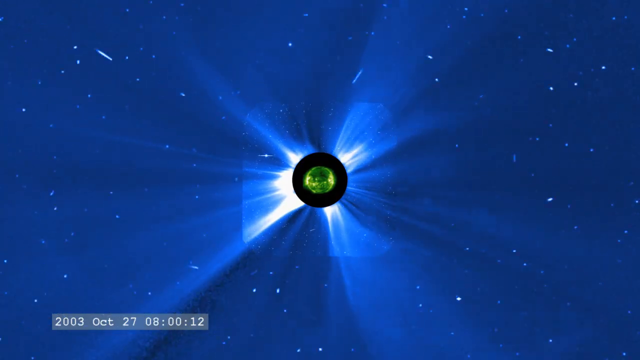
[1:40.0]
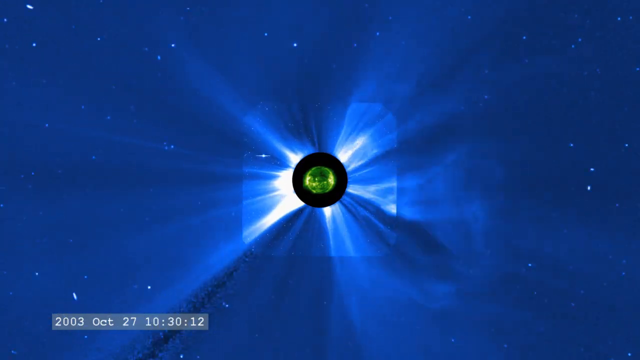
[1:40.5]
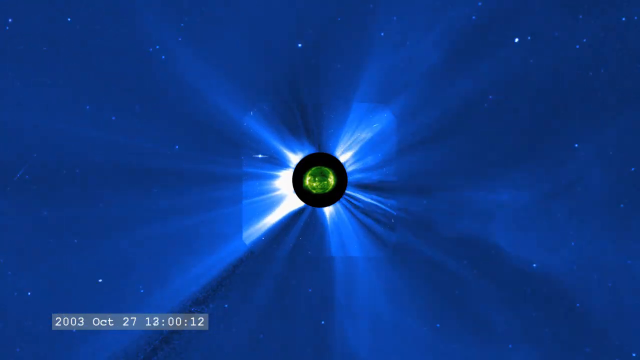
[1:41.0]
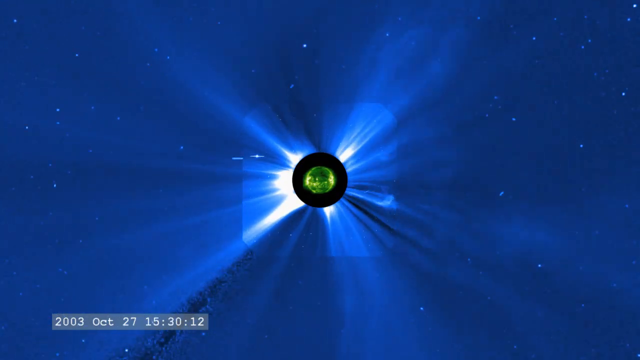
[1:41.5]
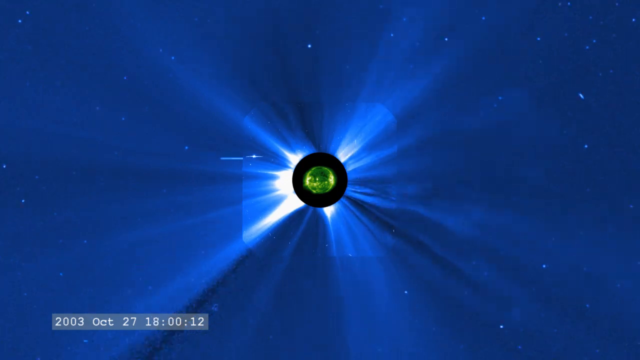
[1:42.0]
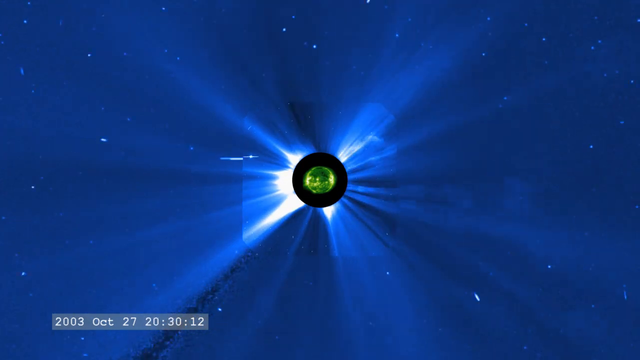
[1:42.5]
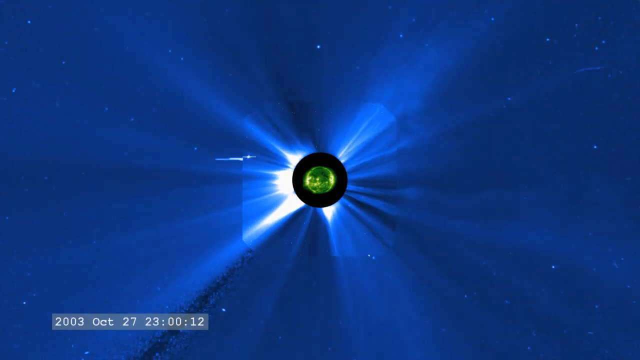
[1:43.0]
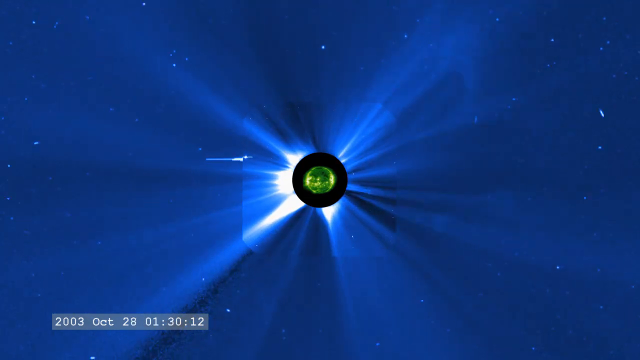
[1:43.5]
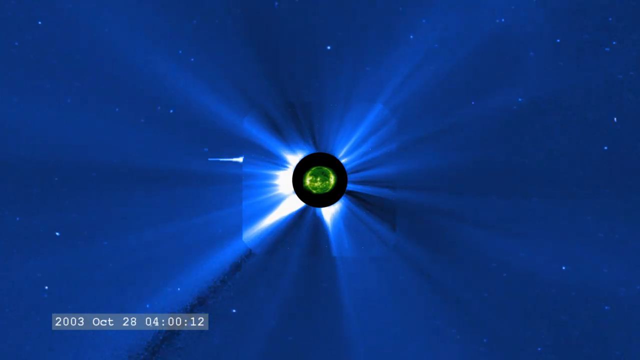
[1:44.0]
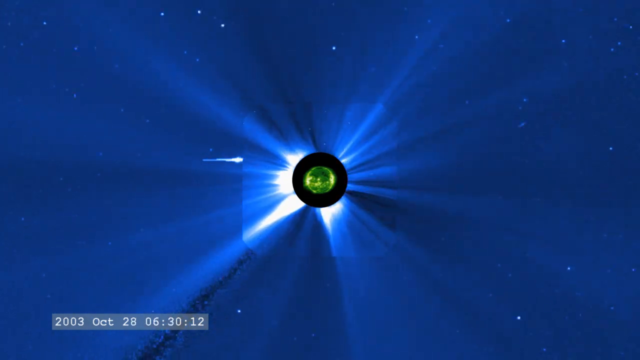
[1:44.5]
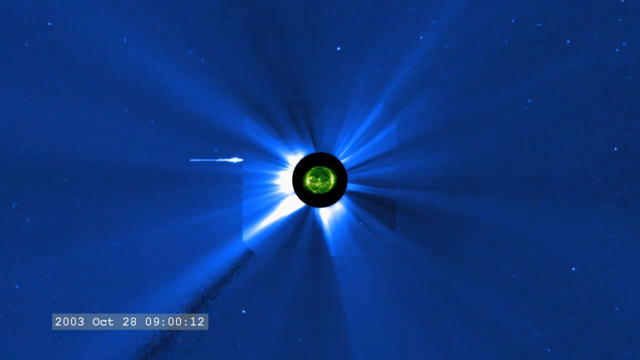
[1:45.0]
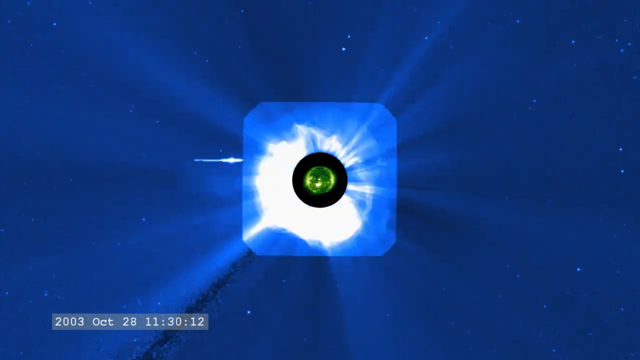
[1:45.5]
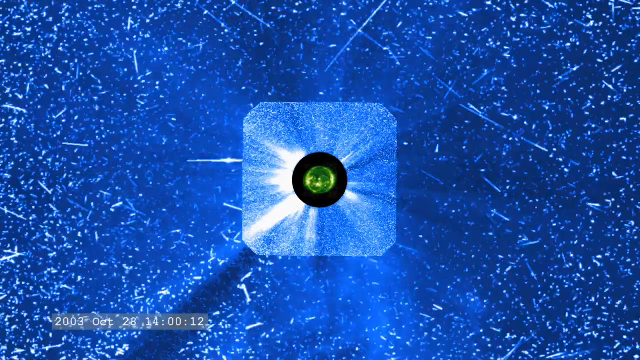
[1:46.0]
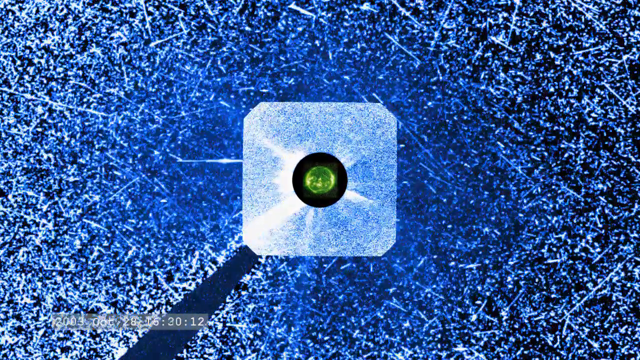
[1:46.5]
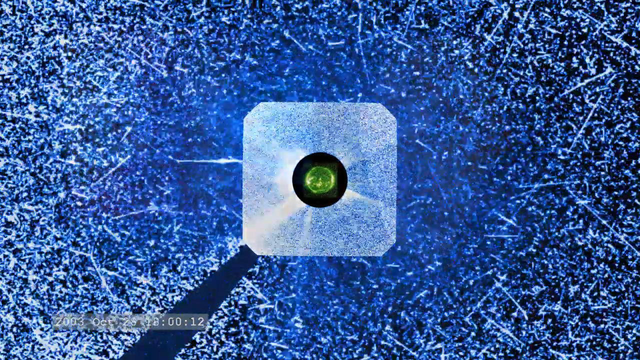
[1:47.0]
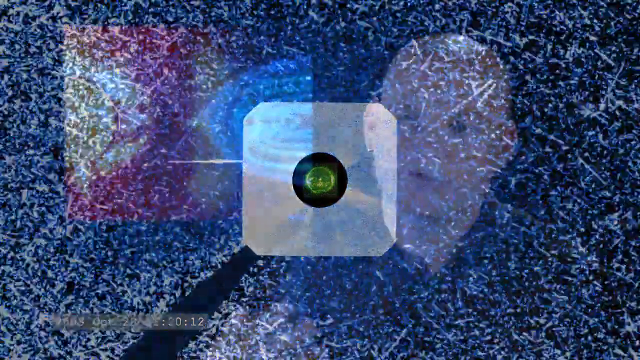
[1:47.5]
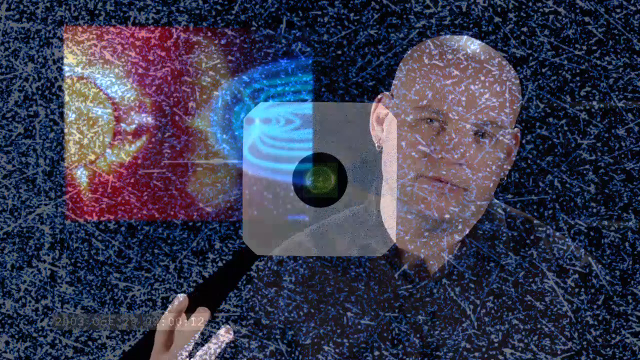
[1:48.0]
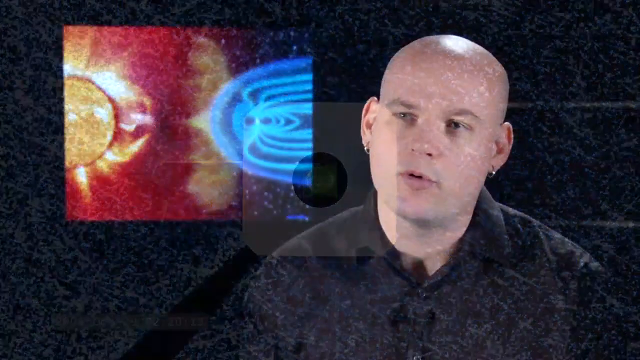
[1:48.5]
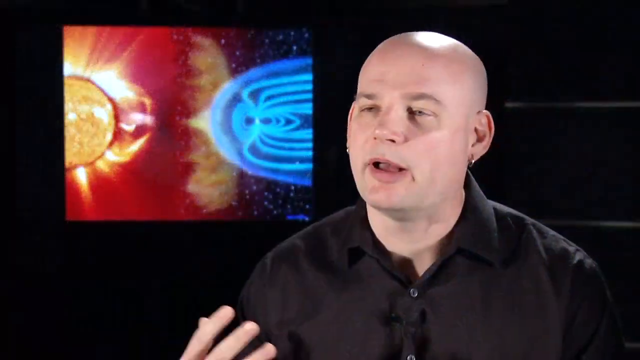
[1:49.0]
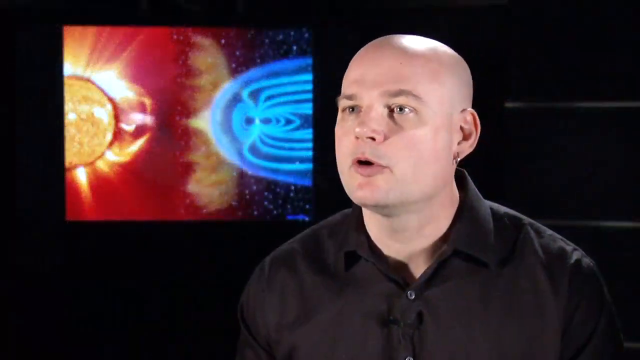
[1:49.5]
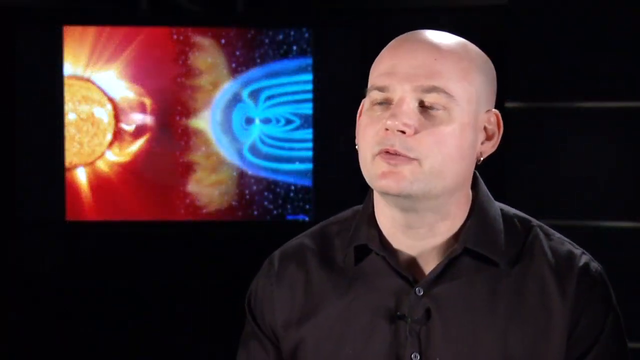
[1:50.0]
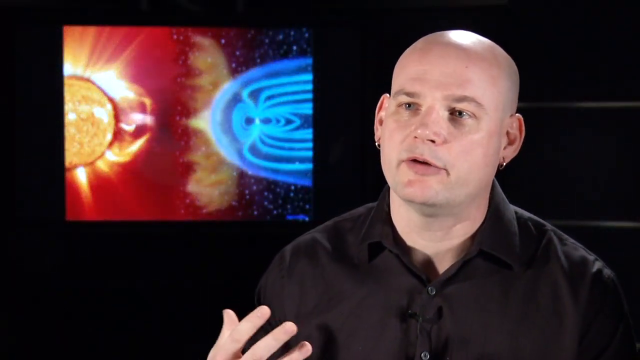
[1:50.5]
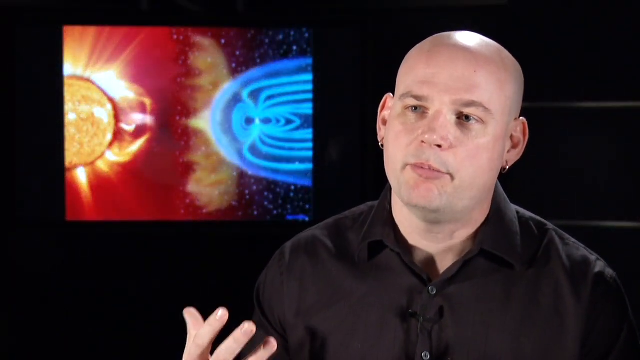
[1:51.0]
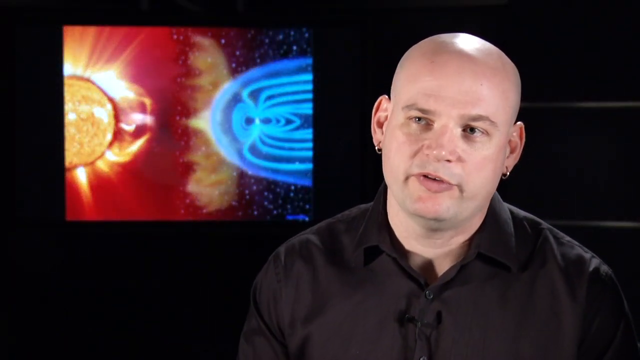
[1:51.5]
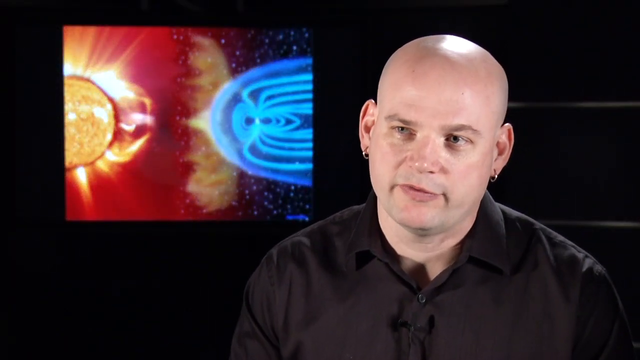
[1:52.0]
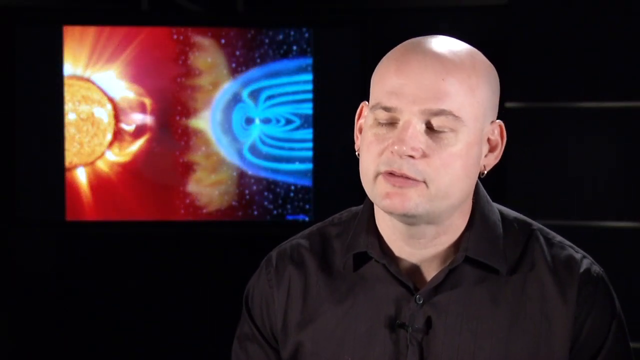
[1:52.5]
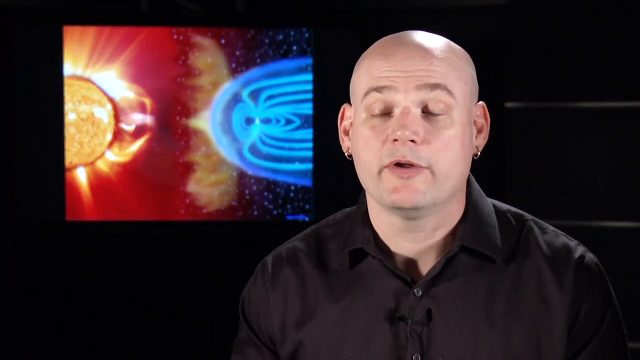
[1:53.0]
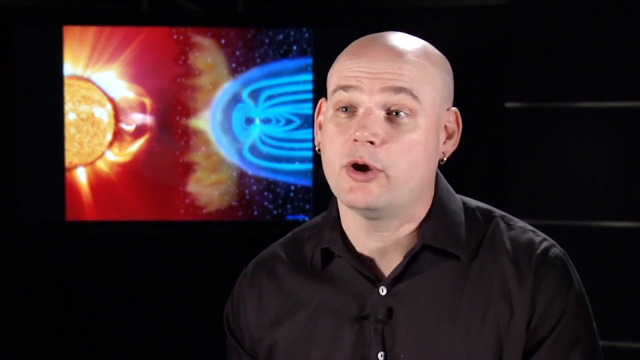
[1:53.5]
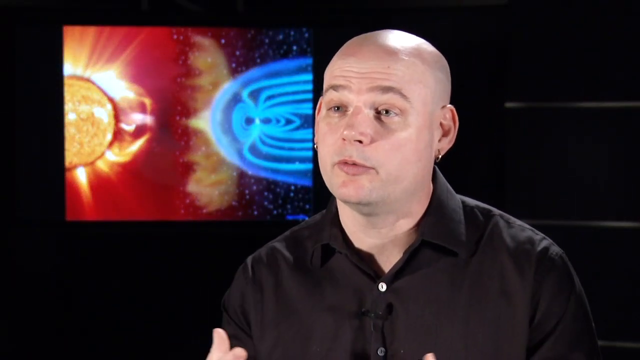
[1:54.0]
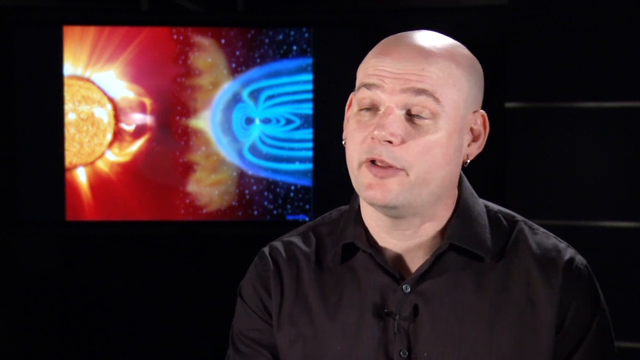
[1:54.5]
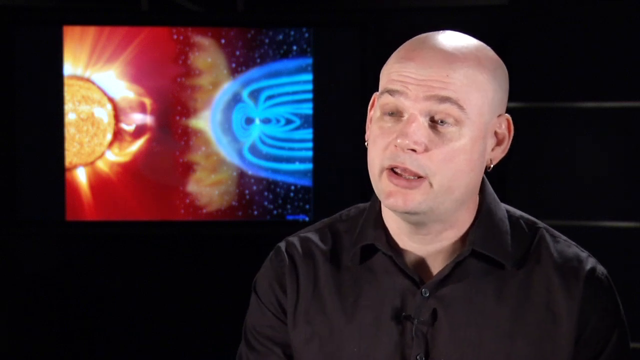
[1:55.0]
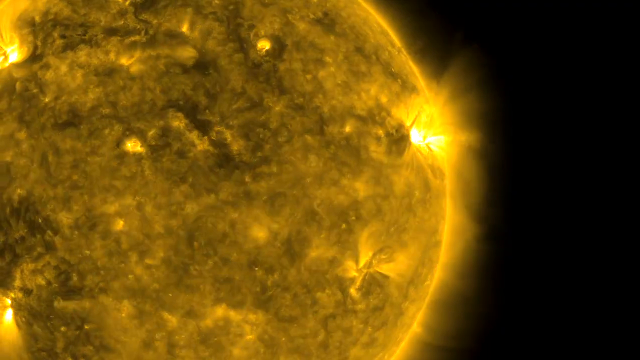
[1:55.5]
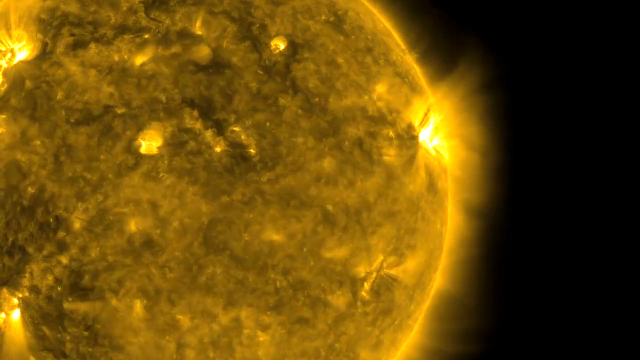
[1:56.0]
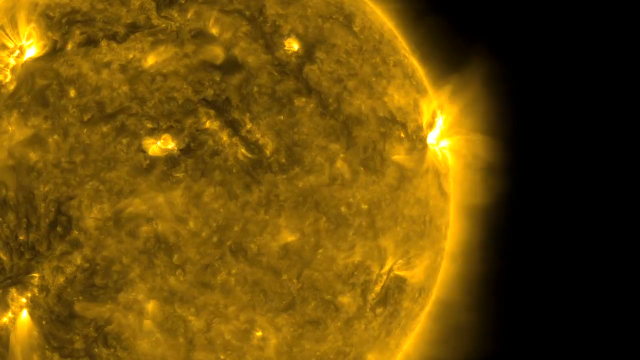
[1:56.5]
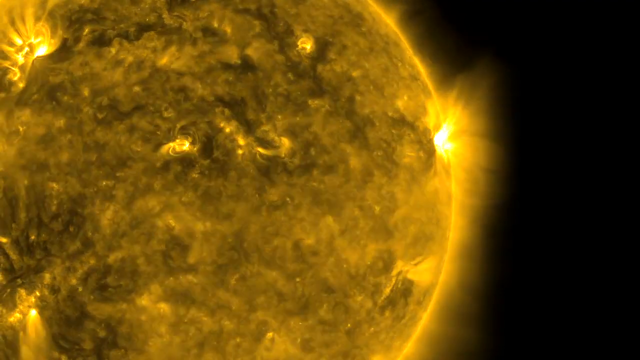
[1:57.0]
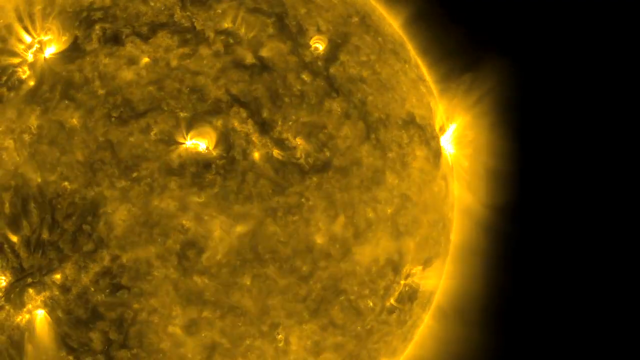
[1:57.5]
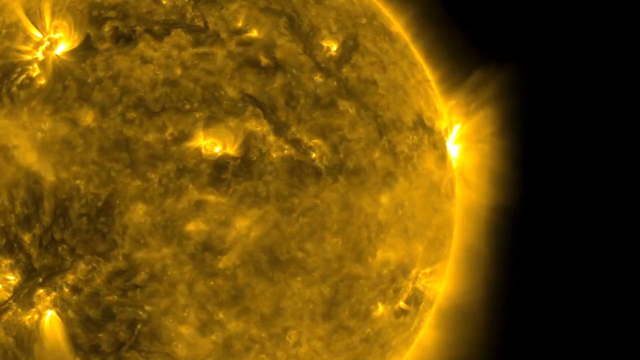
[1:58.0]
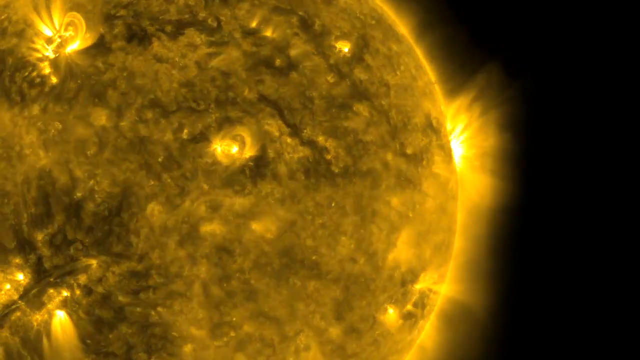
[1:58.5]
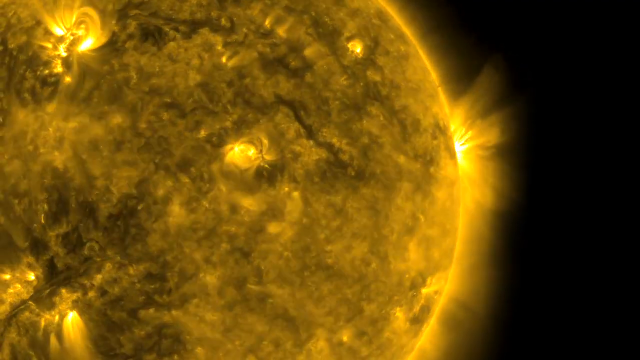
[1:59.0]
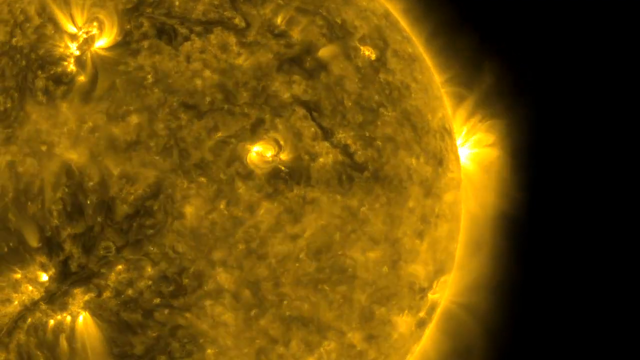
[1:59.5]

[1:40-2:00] A green circle in the middle looks like the sun, surrounded by a black ring, with a lot of light blue light around that ring. A date and time in the bottom left corner shows the year 2003, October 27th, and the dates progress. The image changes, and clusters of white, almost like white static, form around in the sky. The scene changes to the man sitting on the right side, facing and looking to the left as he talks. Then a very large image of a yellow sun appears on the left, with solar flares on its surface as it rotates to the right.